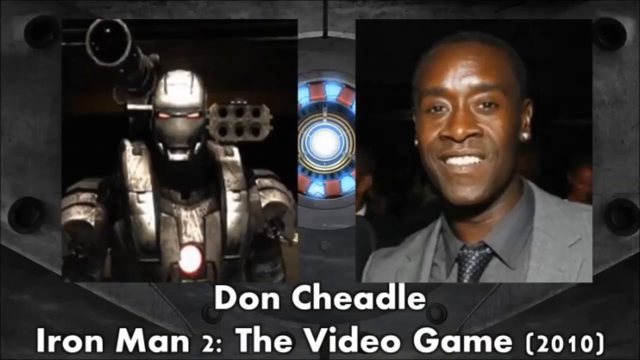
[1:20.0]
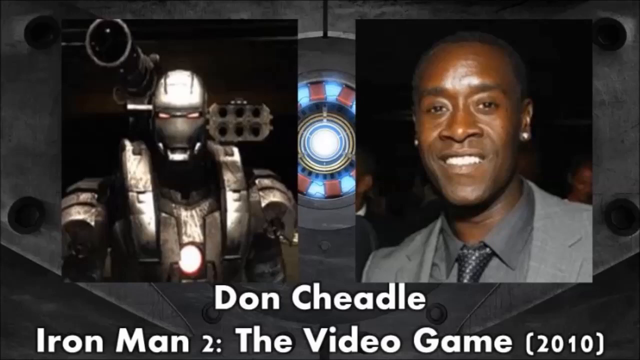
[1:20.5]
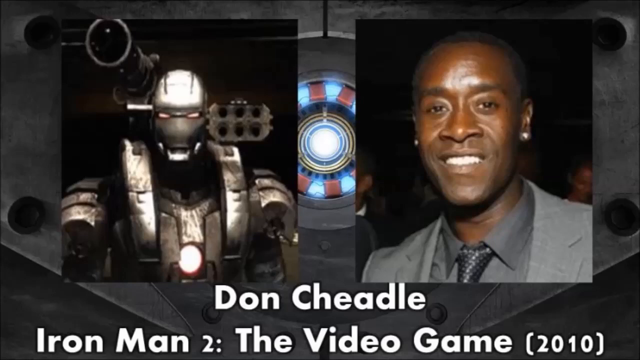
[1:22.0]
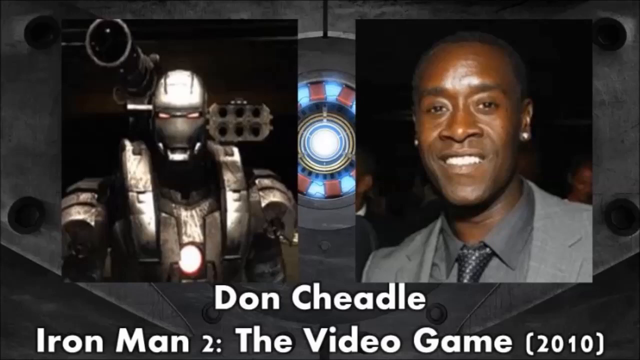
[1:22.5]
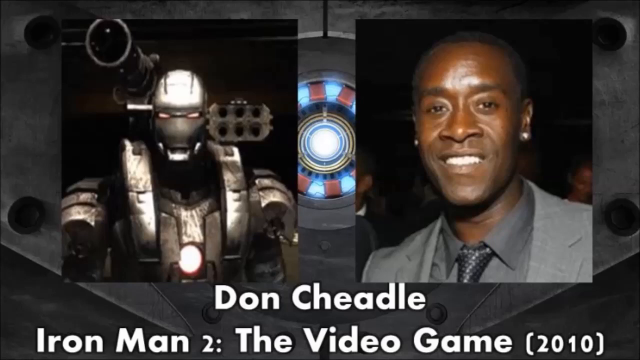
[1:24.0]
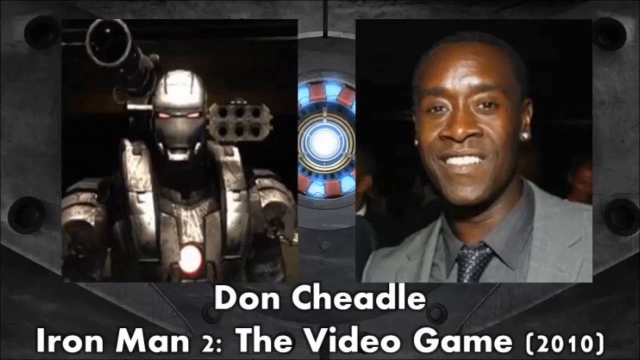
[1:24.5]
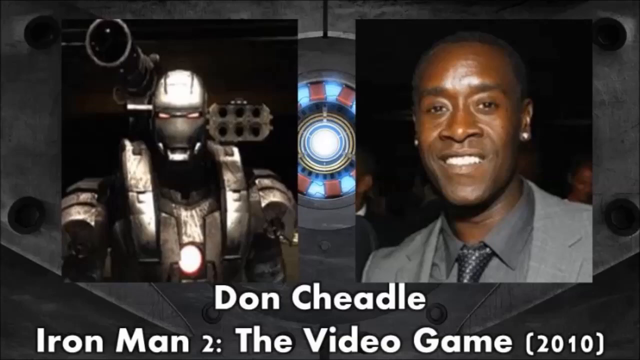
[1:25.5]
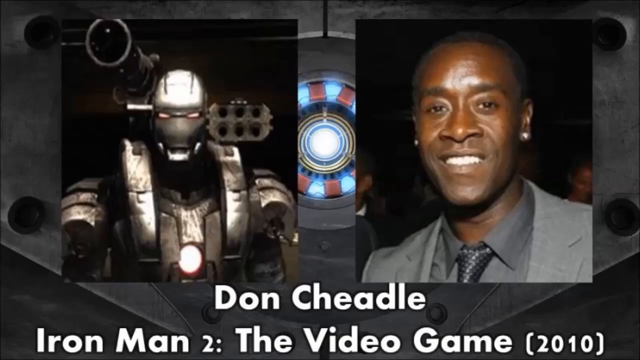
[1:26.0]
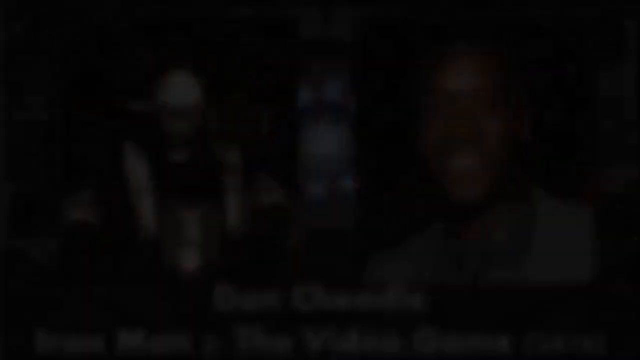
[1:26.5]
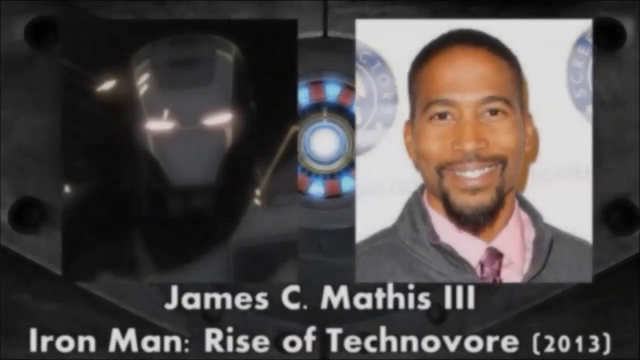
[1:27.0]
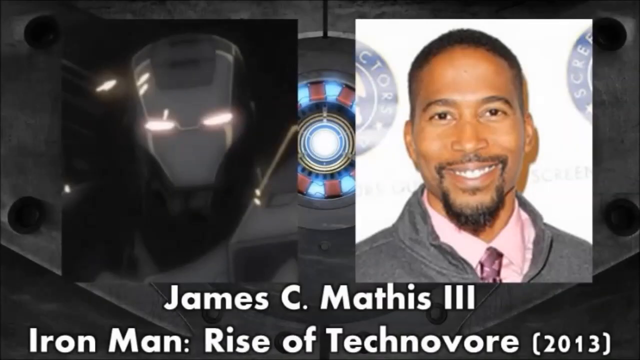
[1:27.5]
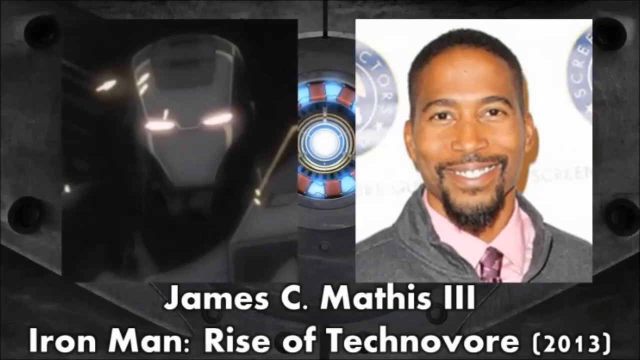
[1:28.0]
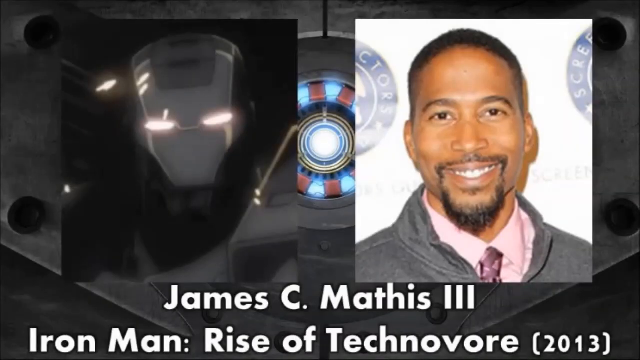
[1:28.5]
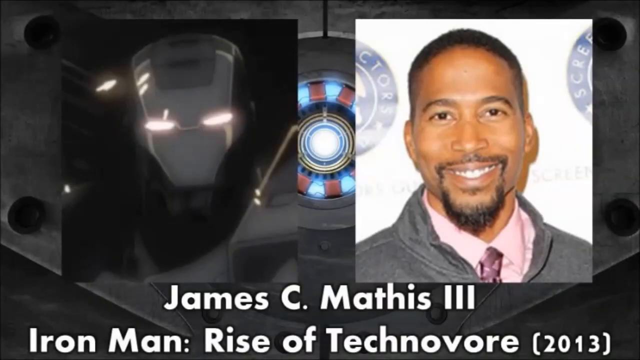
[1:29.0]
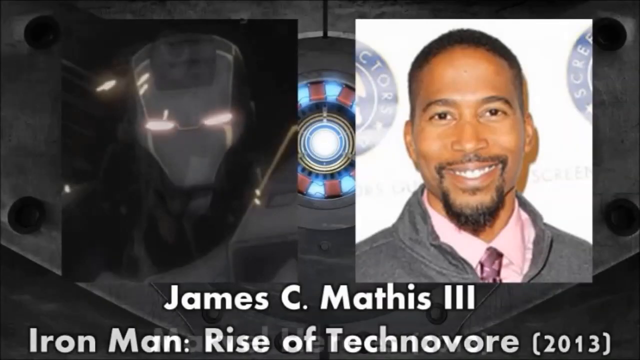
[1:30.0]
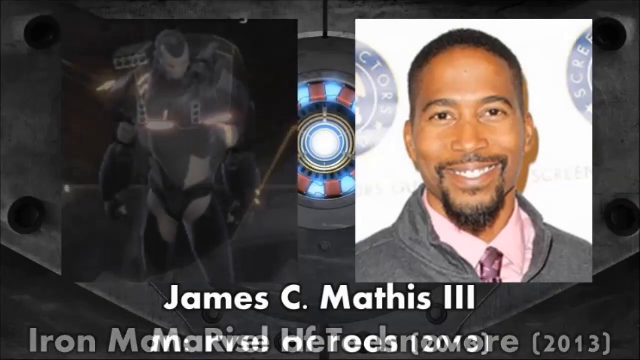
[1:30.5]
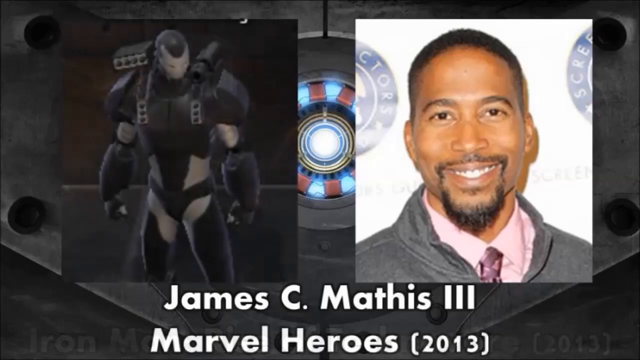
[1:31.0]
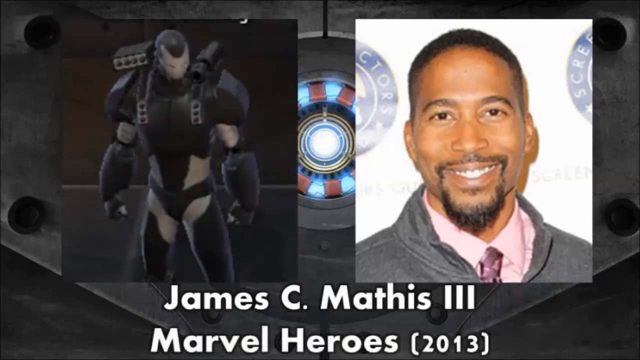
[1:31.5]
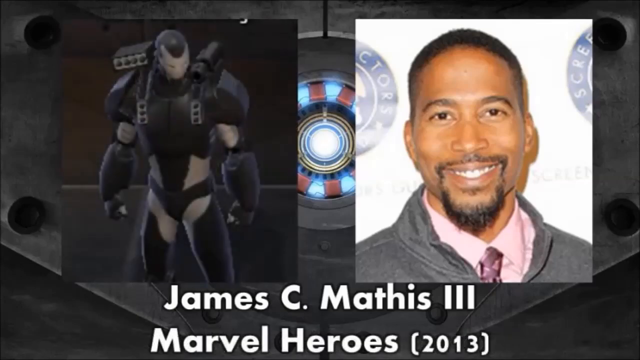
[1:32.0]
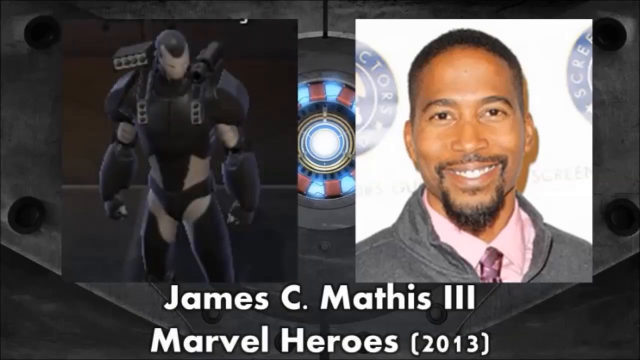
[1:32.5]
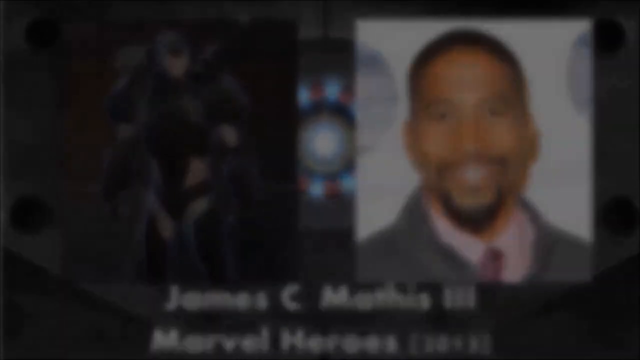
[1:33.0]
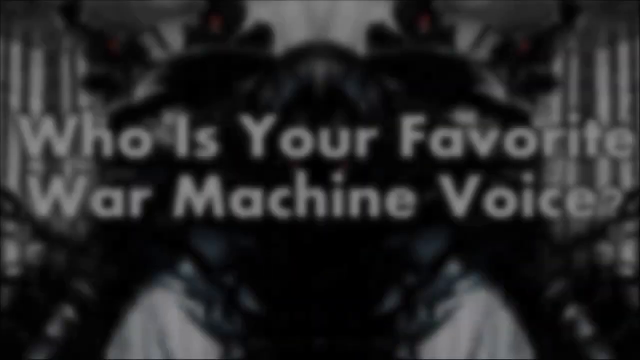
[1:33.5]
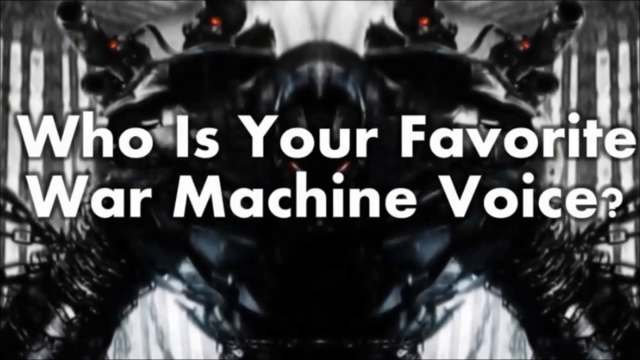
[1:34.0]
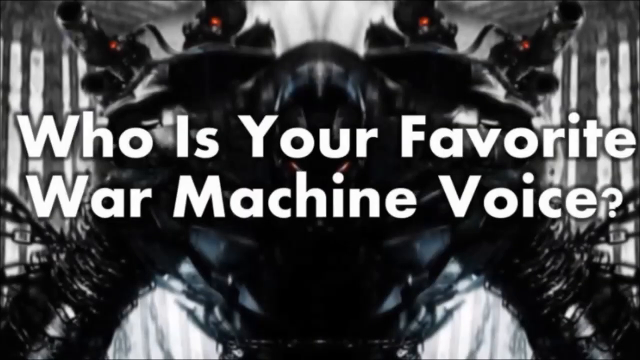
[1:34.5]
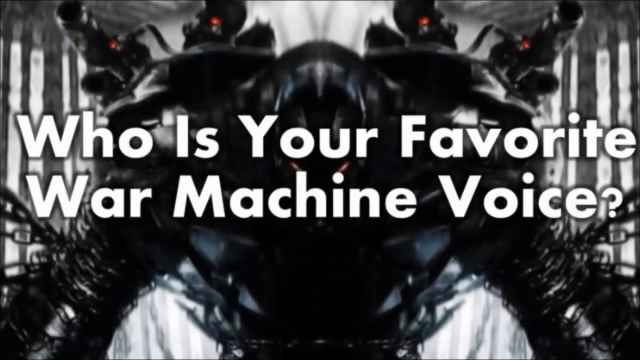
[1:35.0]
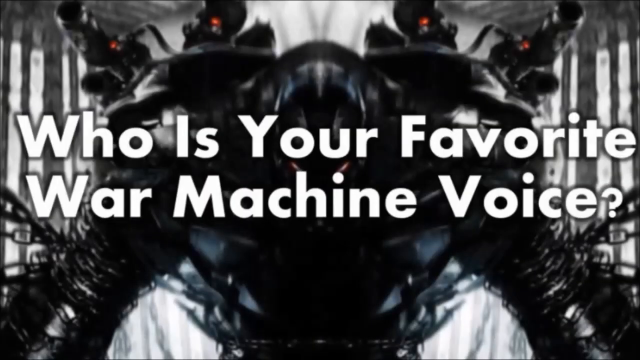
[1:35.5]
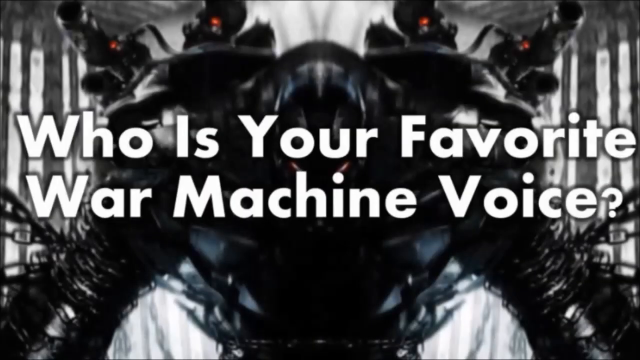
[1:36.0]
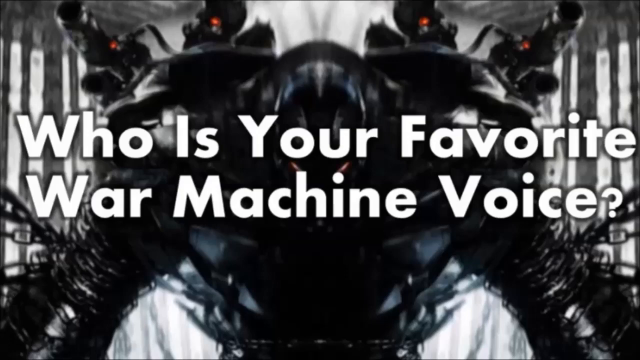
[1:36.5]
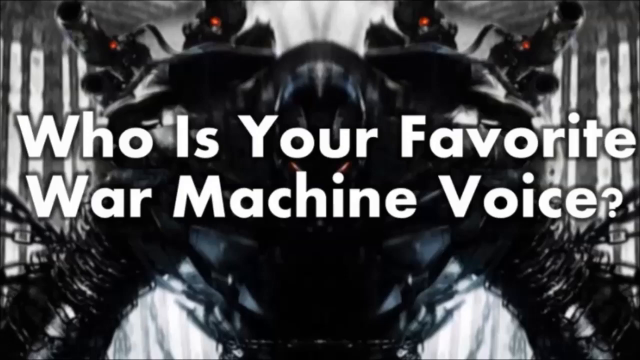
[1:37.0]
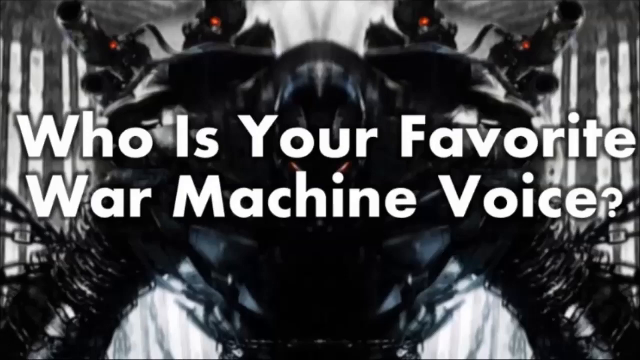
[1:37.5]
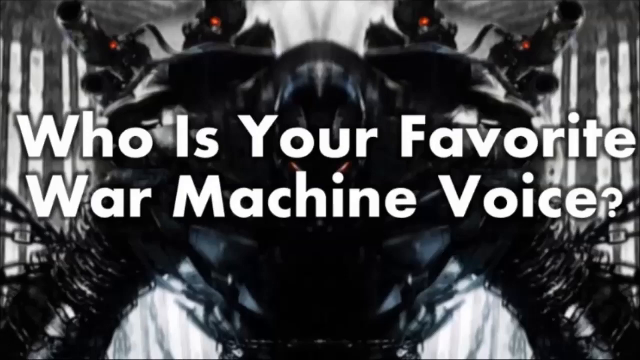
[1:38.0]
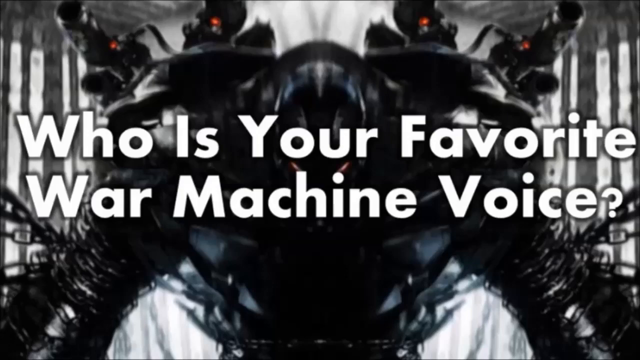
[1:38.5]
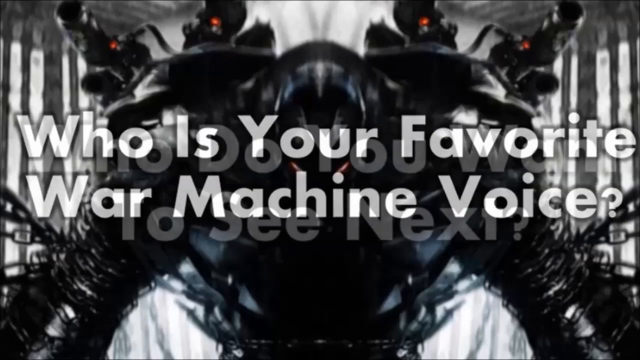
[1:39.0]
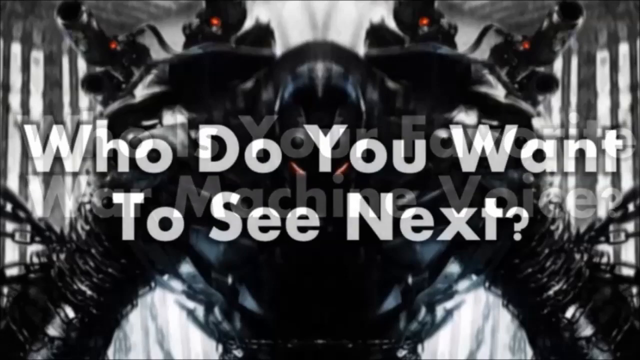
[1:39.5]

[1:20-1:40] Don Cheadle appears, from the Iron Man 2 video game released in 2010. On the right-hand side he wears a grey suit and earrings and is smiling, and on the right-hand side is also the suit his character wears, which looks like the previous character's suit but in a more realistic form. Next, from 2011, a black man on the right-hand side smiles, wearing a grey coat, a pink shirt and a pink and purple tie; on the left-hand side is his Iron Man character, similar to the previous one but in blue and white. He is also shown as part of Marvel Heroes in 2013, with an image of his character popping up on the right-hand side. The video then goes to a scene asking "who is your favourite war machine," with what looks like a monster in black and white with black eyes in the background.